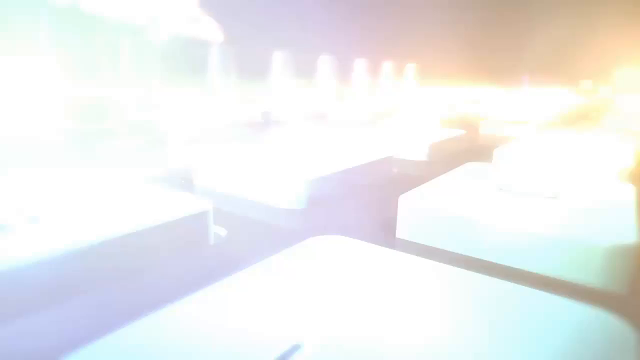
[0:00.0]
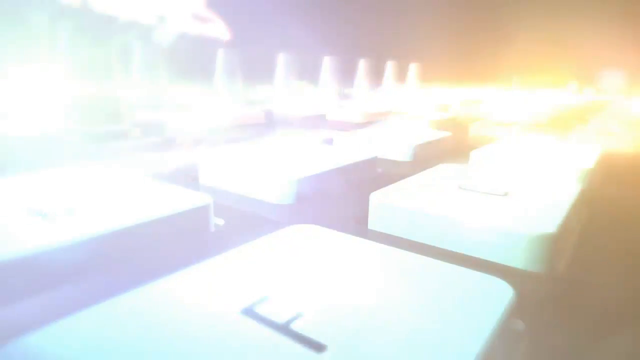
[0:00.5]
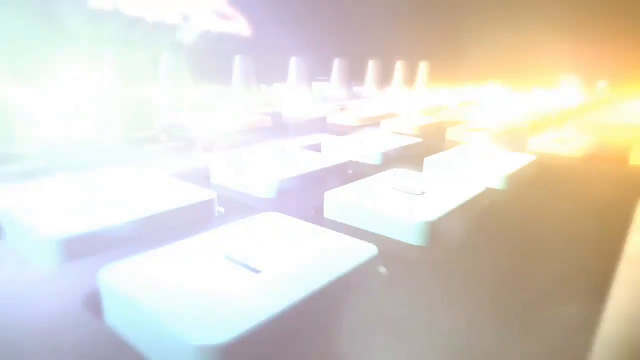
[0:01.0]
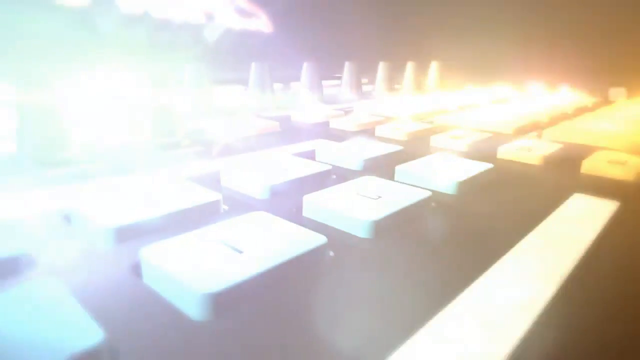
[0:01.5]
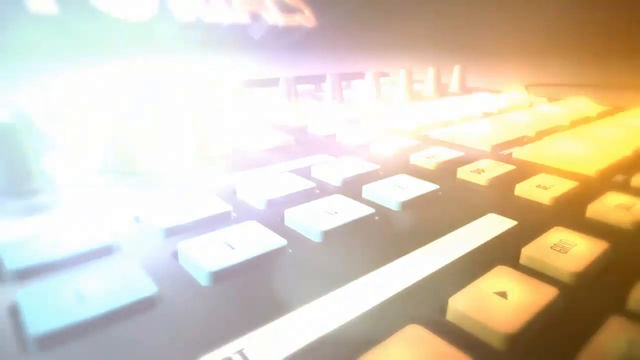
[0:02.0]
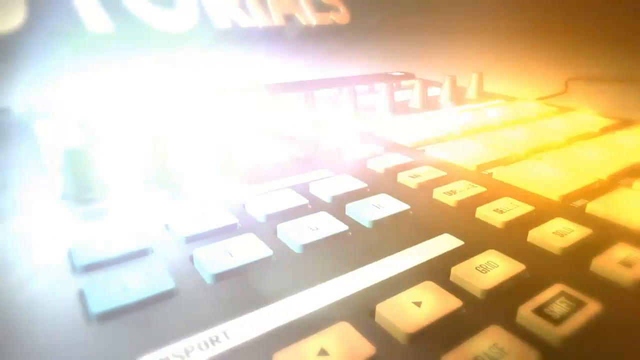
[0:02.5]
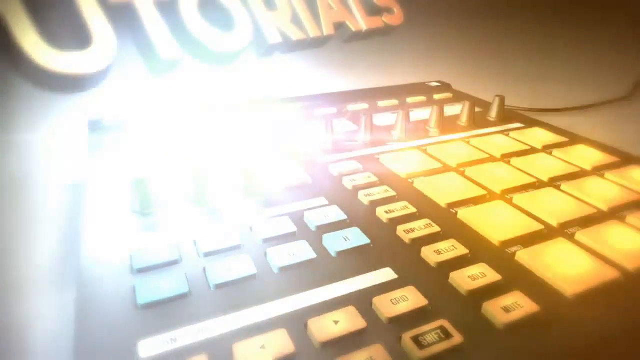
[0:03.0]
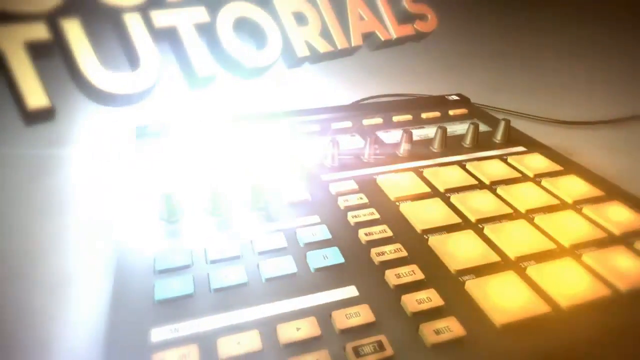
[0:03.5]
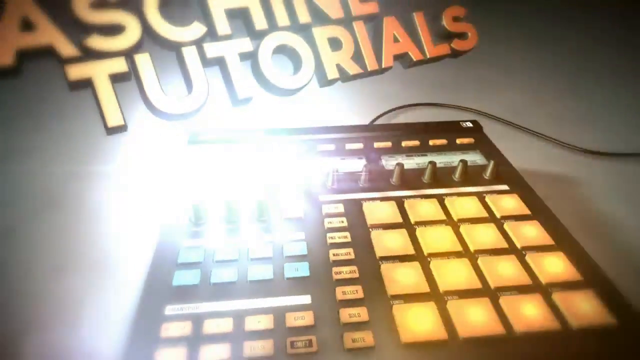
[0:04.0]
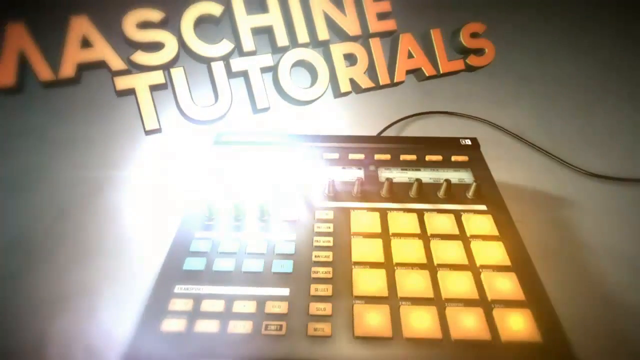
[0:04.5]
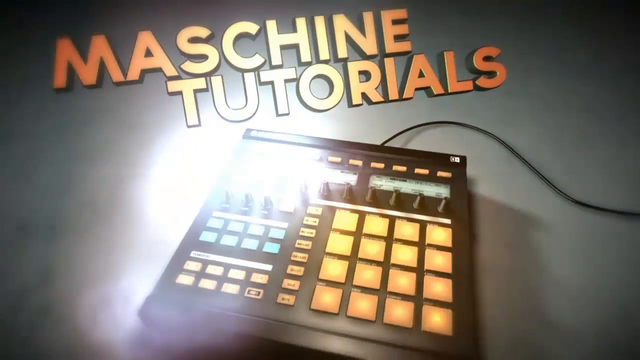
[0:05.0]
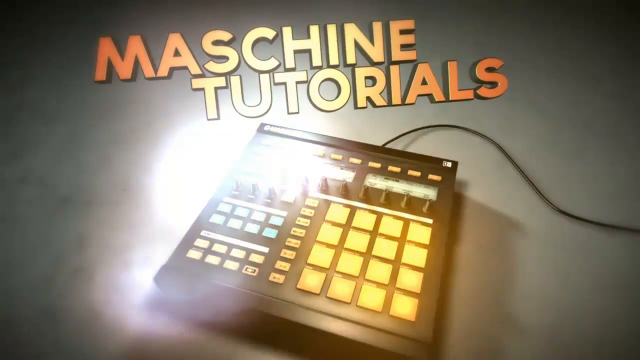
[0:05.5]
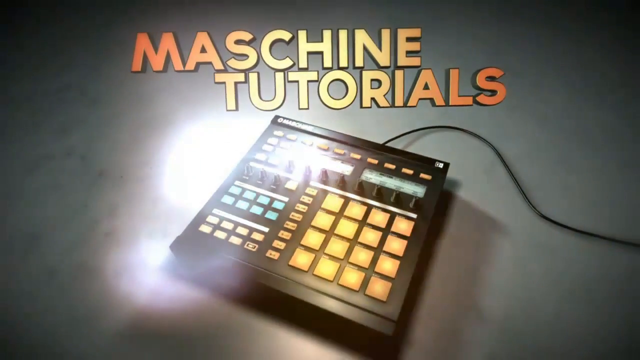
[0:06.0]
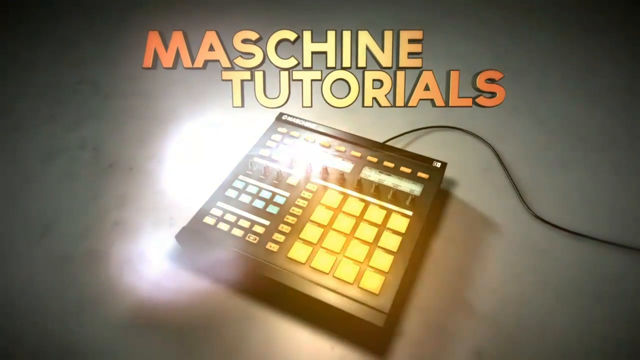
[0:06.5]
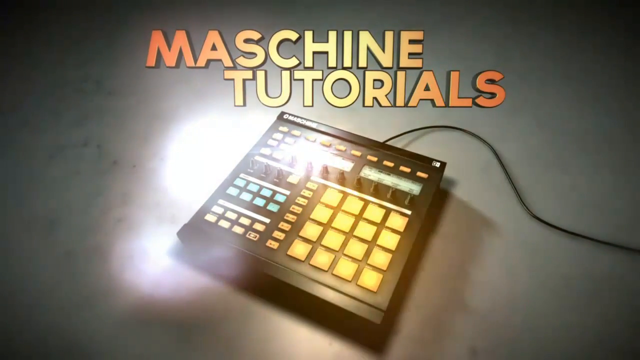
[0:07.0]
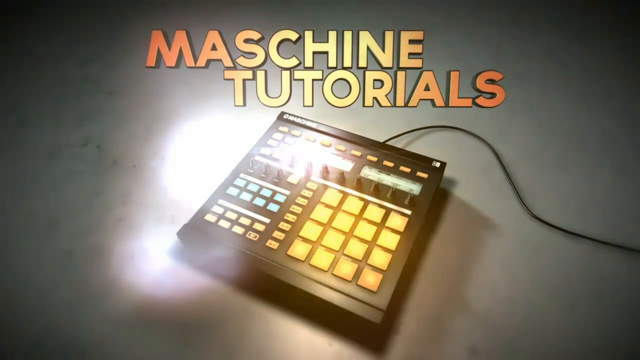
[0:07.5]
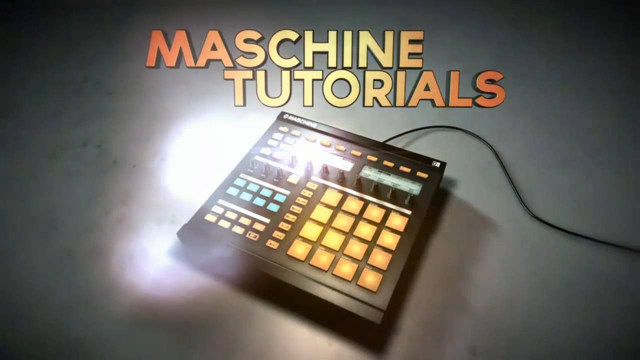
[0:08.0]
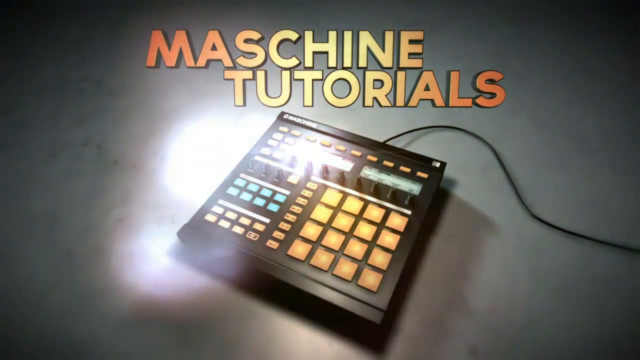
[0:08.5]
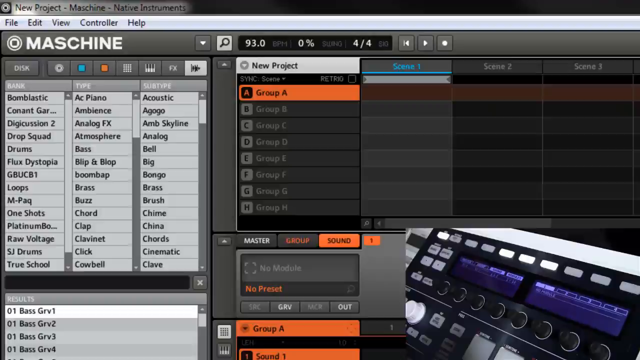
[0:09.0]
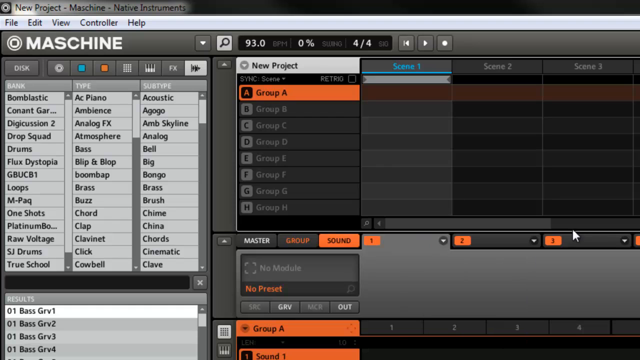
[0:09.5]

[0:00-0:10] The video opens with a very close-up, low-angled view of what appears to be a keyboard, its very bright keys extending into the camera lens. The camera slowly zooms out and moves up, rotating around to the right side. As it zooms out, the keyboard appears as some sort of analog device with multiple gauges at the top, knobs below those, and keys below the knobs. The keys are lit up: the ones on the right are orange, and the ones on the left are smaller and blue. A glaring spotlight is over the top left side of the device, and a cord comes out and goes over to the right side. 3D text reading "Maschine Tutorials" is rendered behind or above the device. The camera zooms out until the text and the device are fully in view, rotating until the device is angled somewhat to the right.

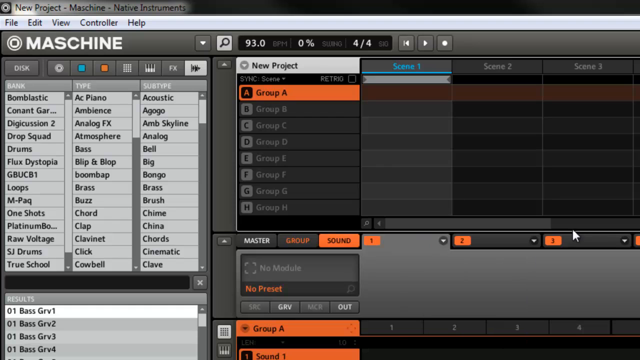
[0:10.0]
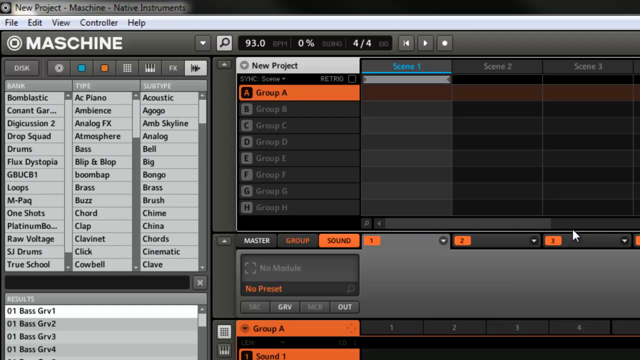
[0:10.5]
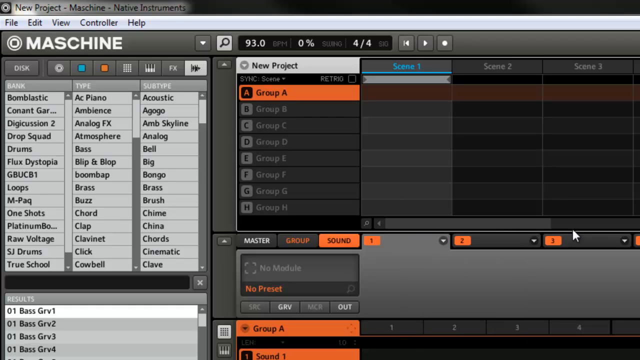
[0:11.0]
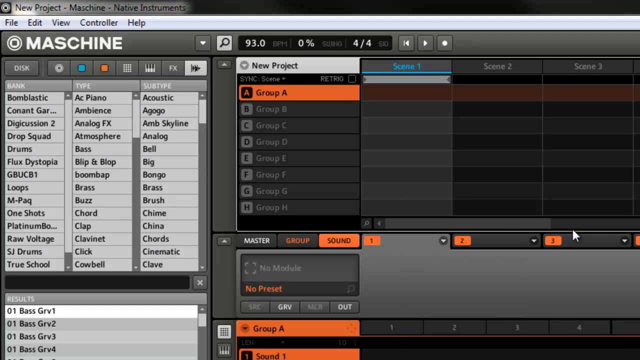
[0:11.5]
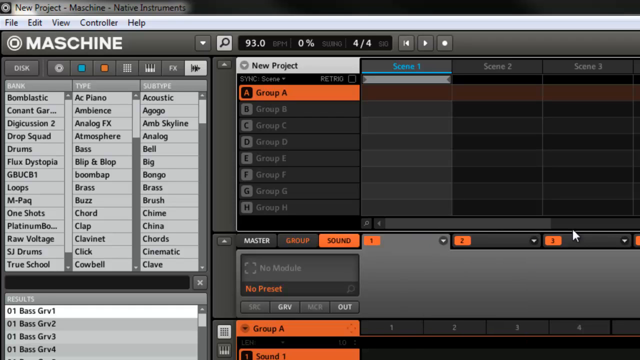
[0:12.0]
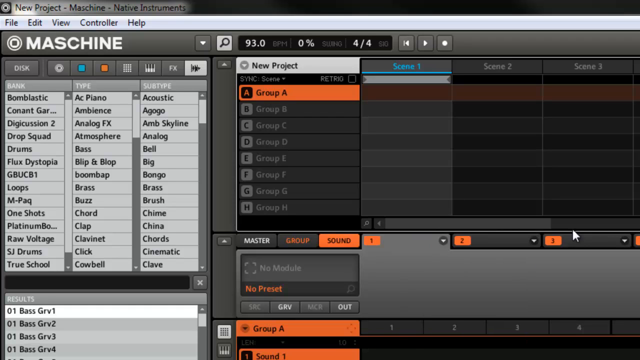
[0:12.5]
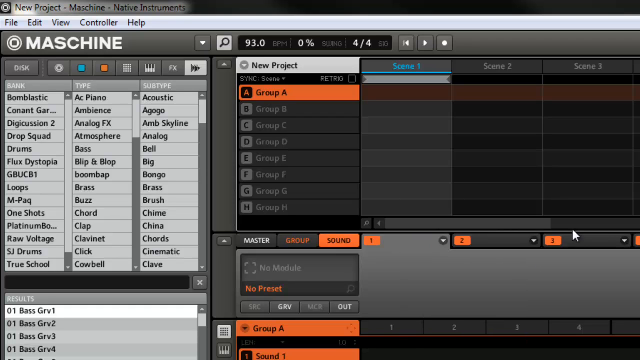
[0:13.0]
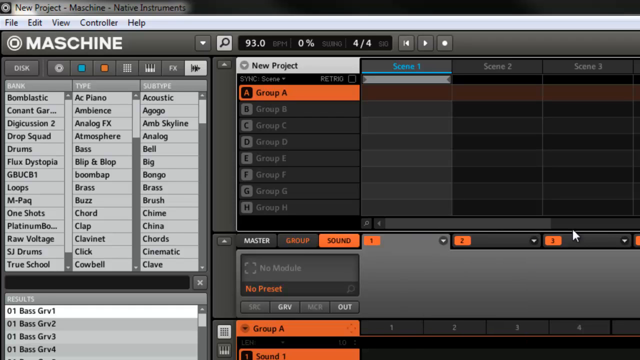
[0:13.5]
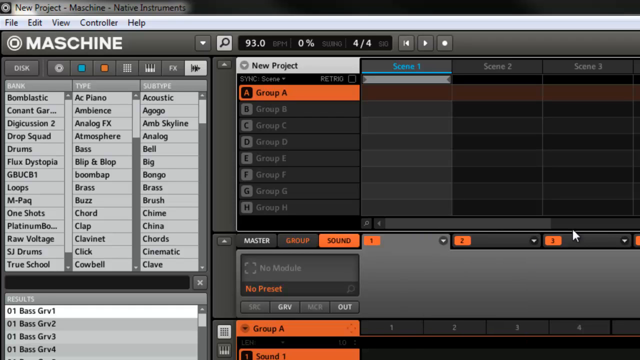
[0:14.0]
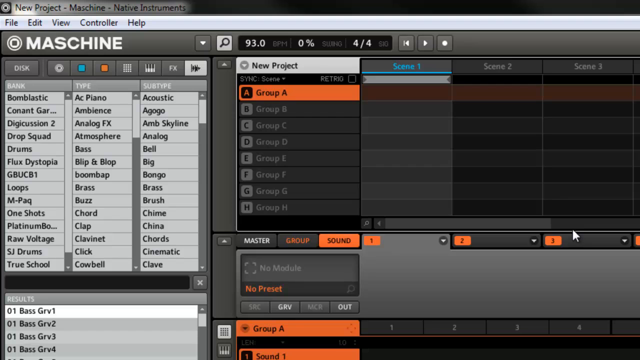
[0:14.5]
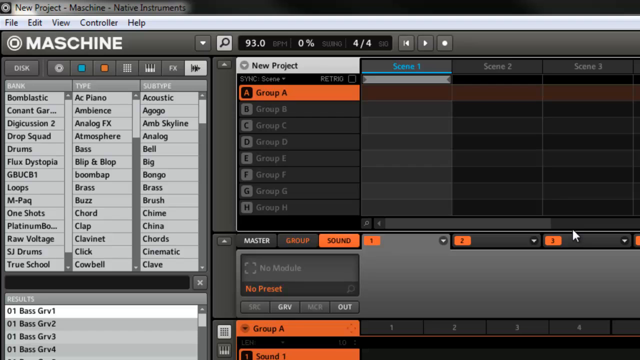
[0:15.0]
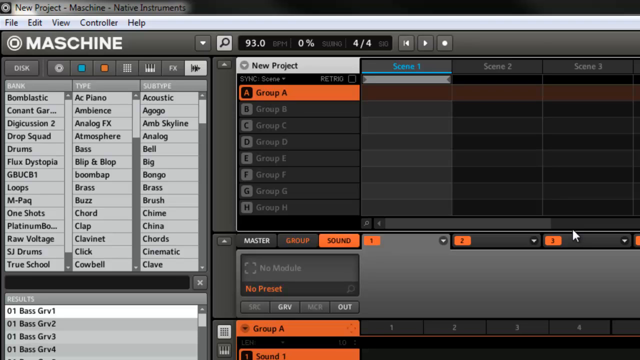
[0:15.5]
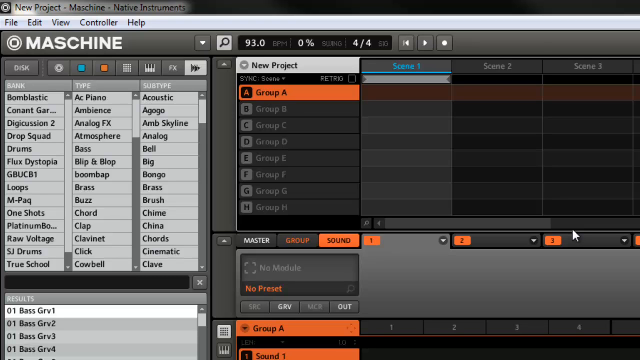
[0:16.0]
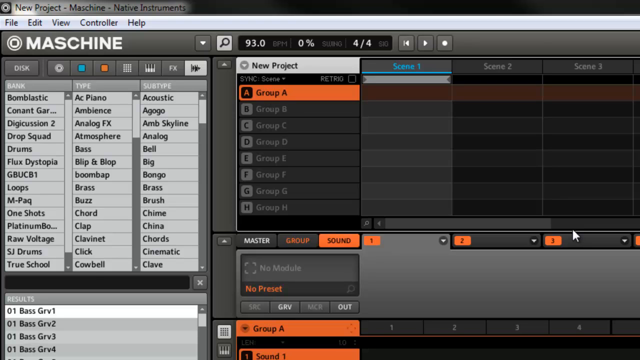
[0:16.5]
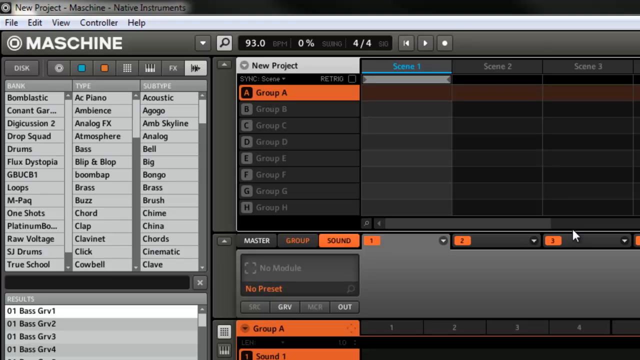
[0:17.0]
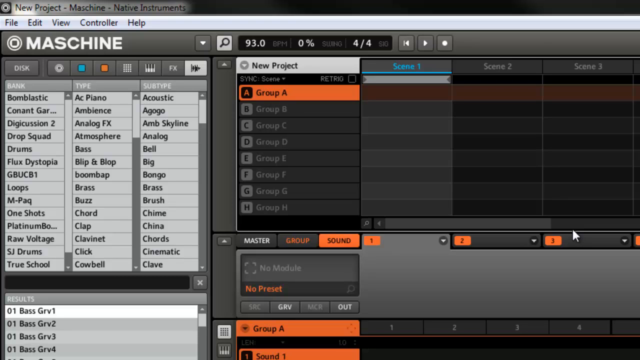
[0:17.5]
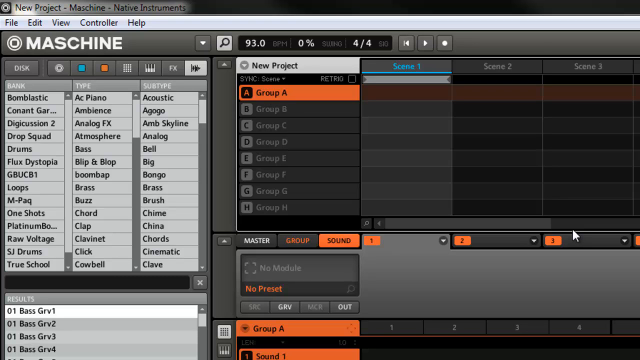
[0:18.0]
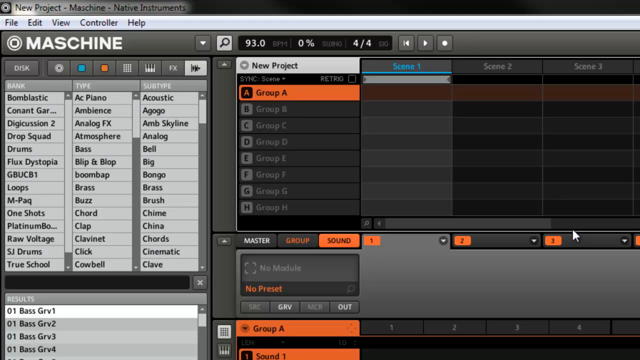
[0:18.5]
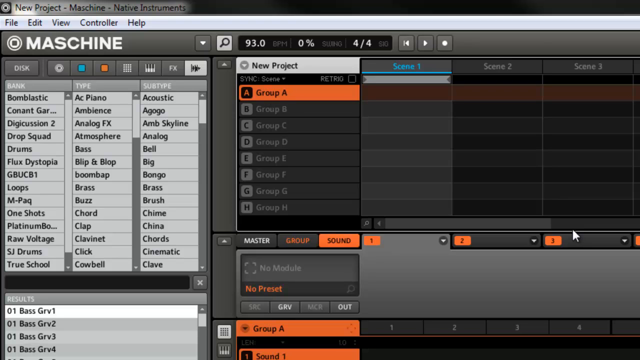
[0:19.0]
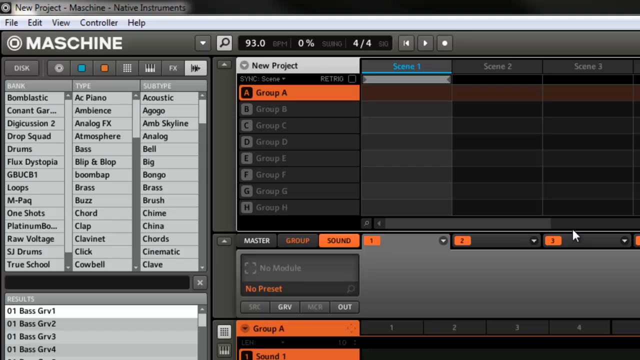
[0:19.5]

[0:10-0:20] An interface for a computer application appears, seemingly a standard Windows interface with the title at the top left and a toolbar below it. In the main window, the word "machine" is in the top left, with menus below it. Three columns show many rows with sliders next to them, and there is text in the left column and the columns to its right. On the right side there is a graph or some sort of spreadsheet view. The interface is shown for a few moments, and nothing seems to happen.